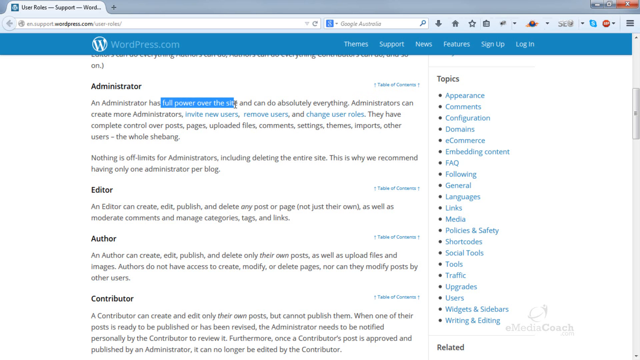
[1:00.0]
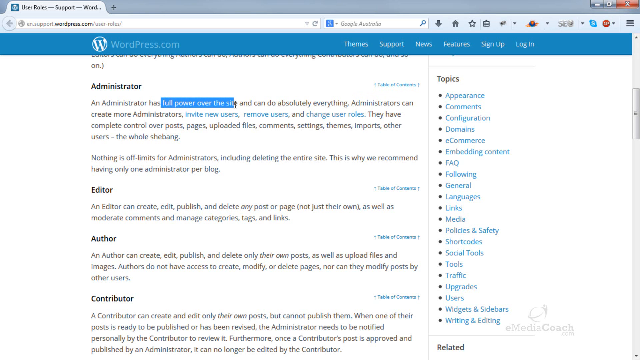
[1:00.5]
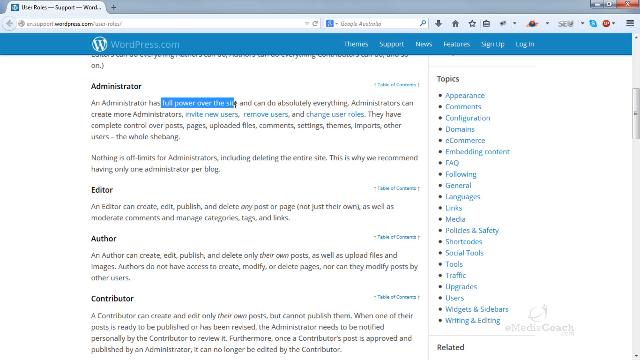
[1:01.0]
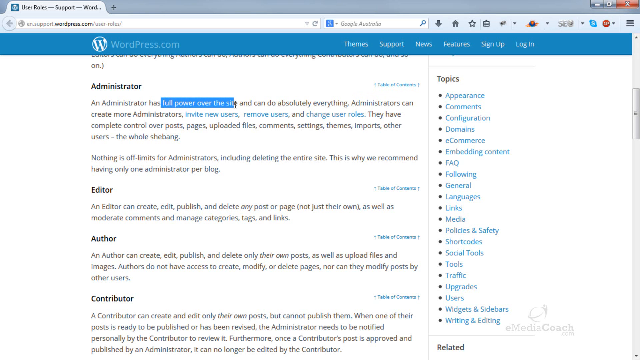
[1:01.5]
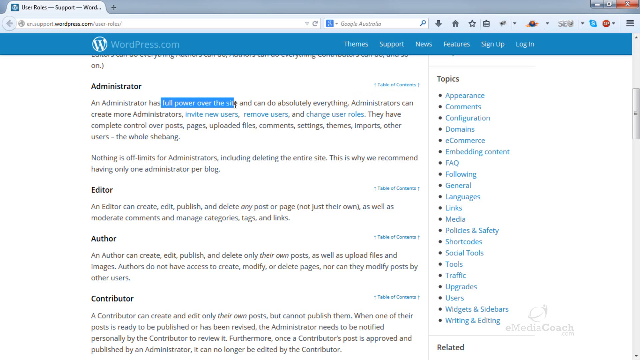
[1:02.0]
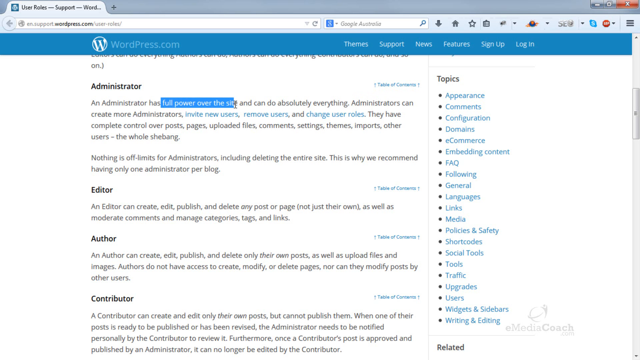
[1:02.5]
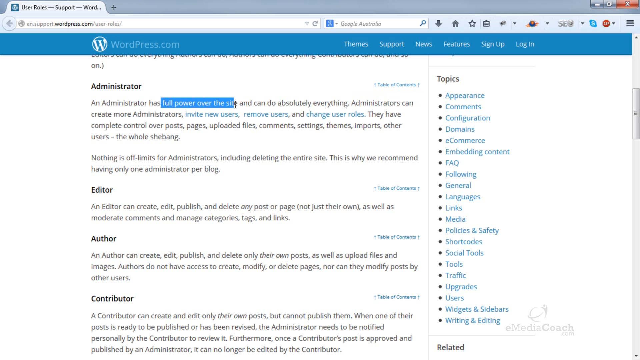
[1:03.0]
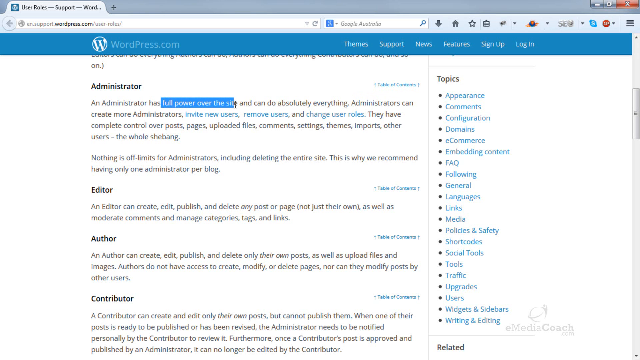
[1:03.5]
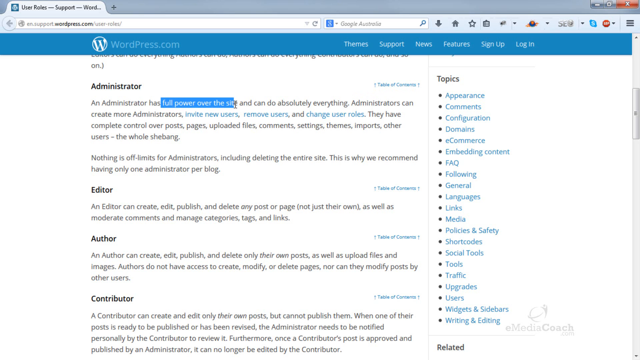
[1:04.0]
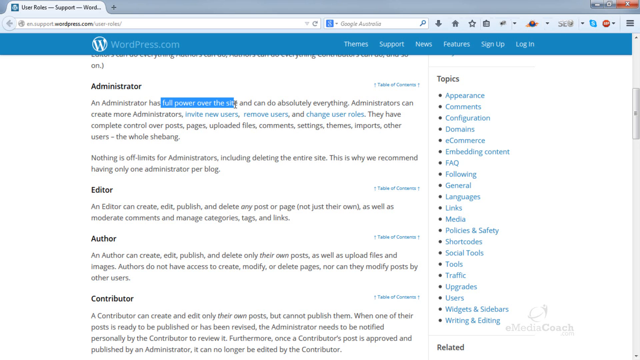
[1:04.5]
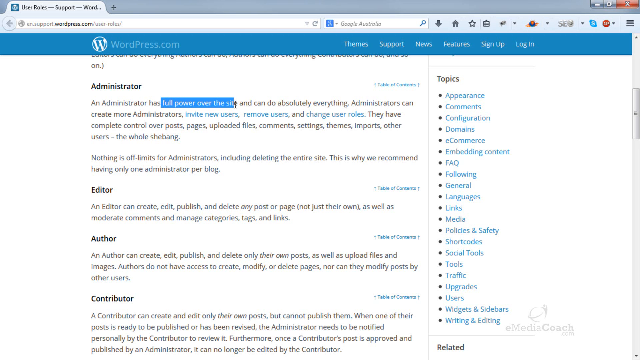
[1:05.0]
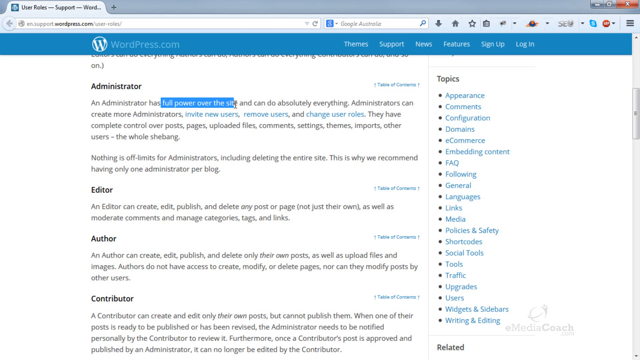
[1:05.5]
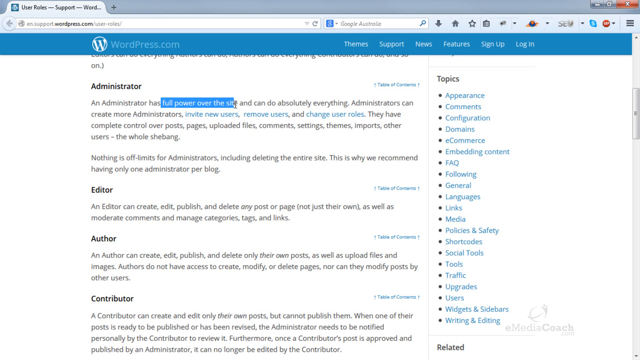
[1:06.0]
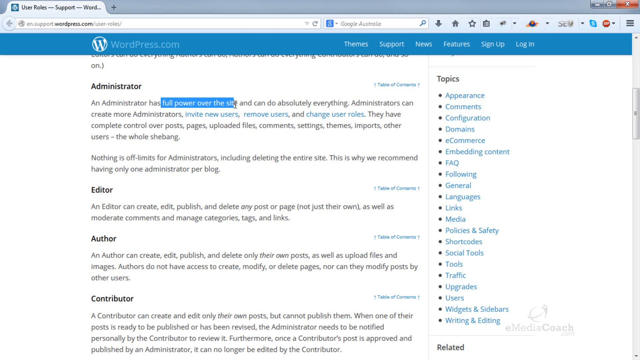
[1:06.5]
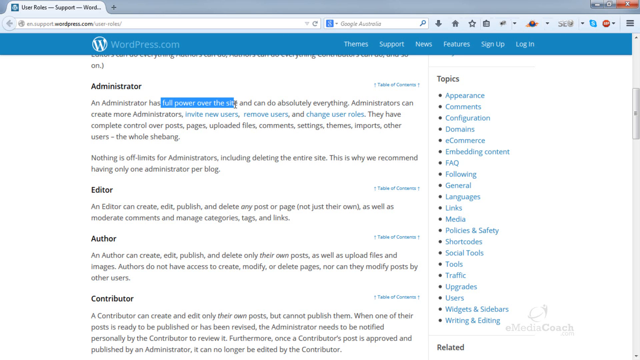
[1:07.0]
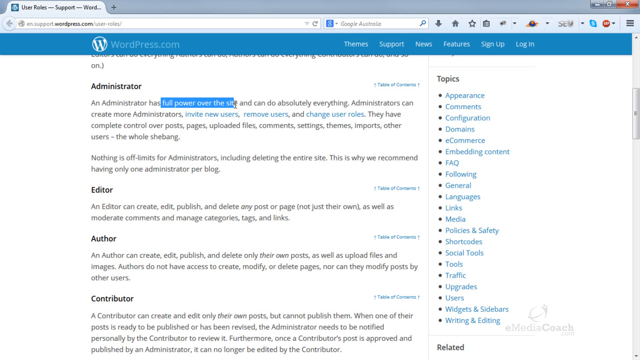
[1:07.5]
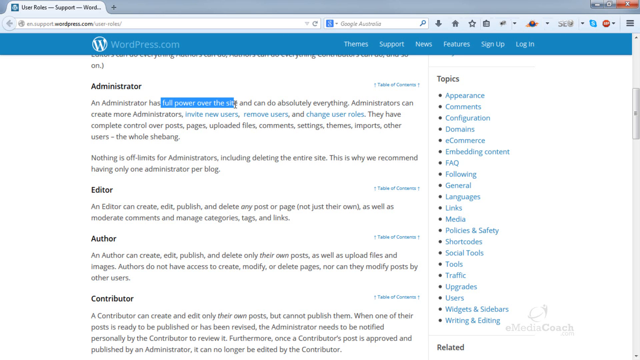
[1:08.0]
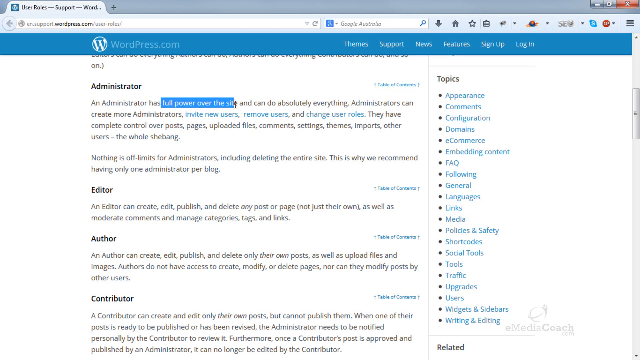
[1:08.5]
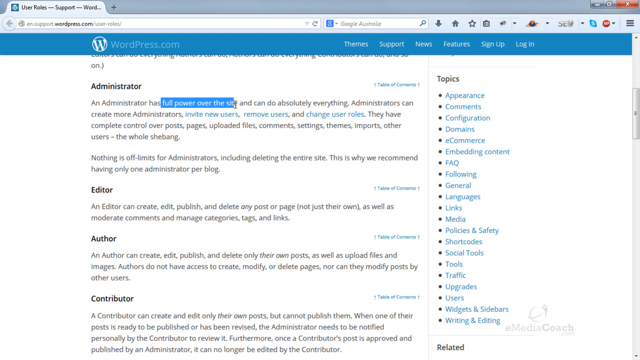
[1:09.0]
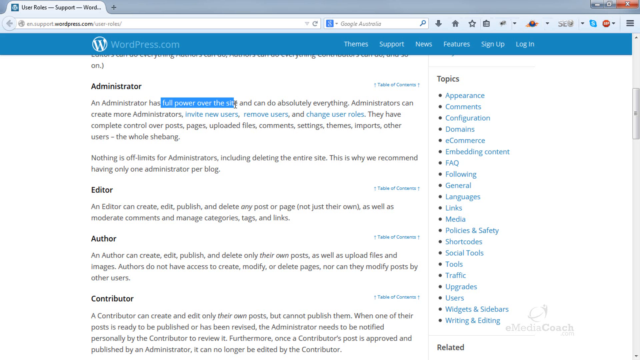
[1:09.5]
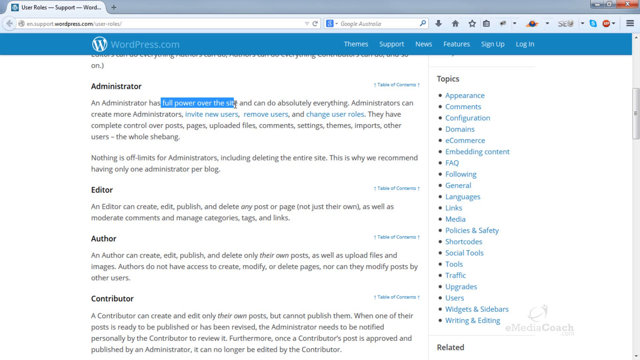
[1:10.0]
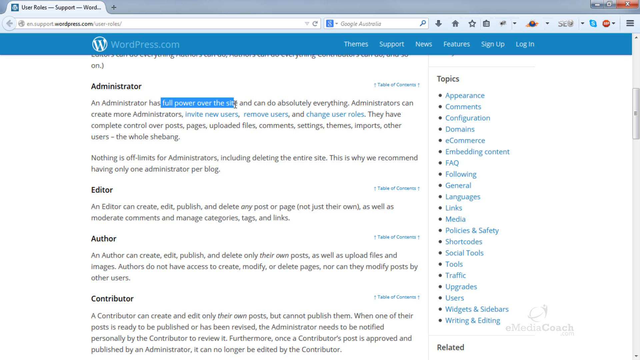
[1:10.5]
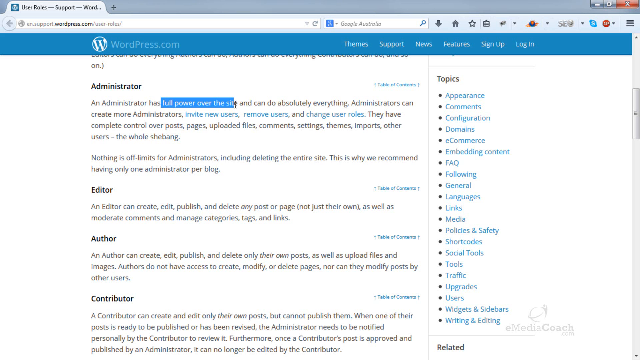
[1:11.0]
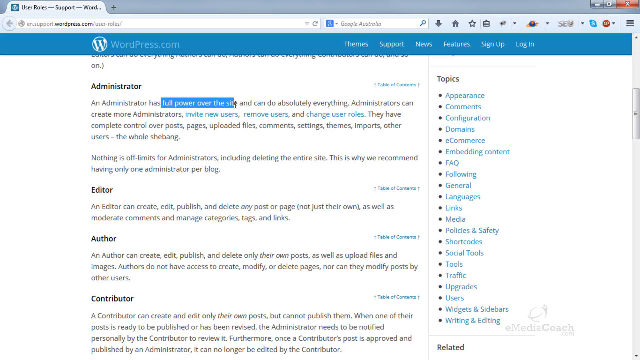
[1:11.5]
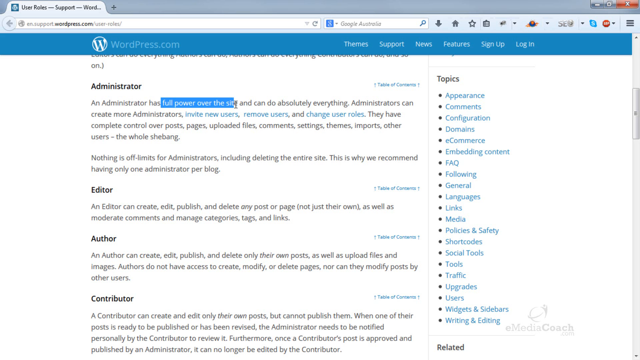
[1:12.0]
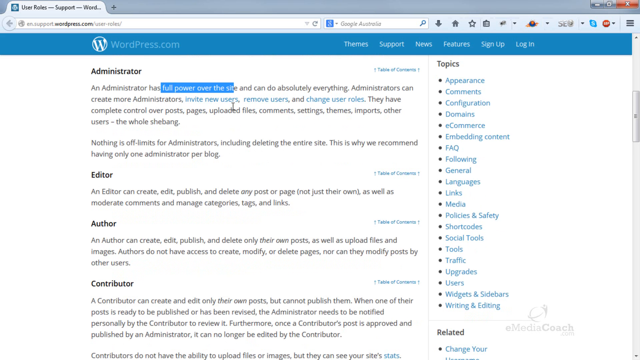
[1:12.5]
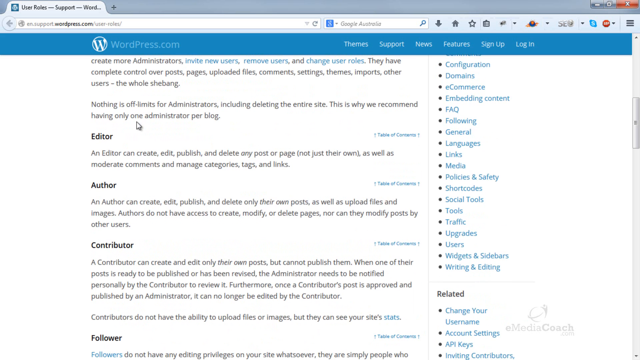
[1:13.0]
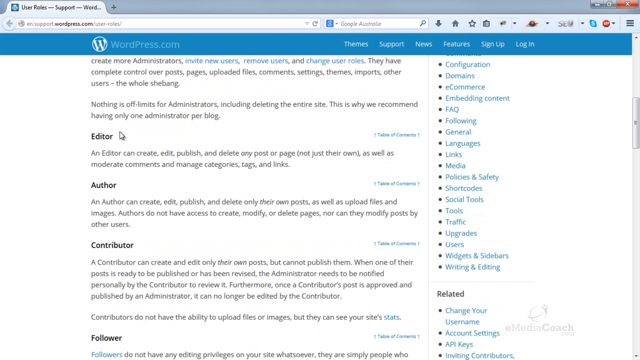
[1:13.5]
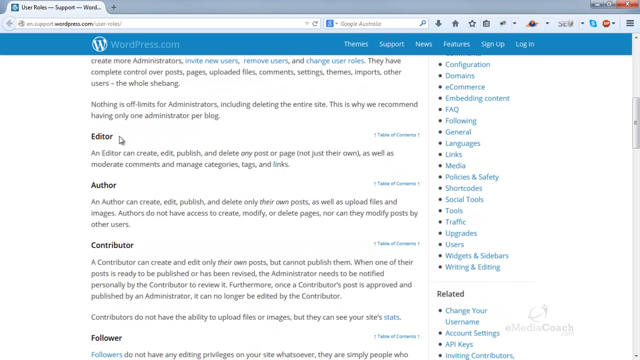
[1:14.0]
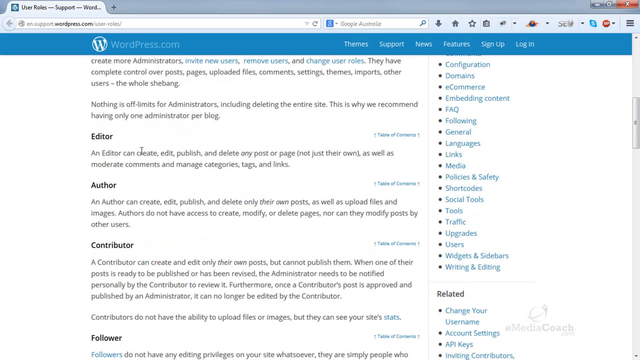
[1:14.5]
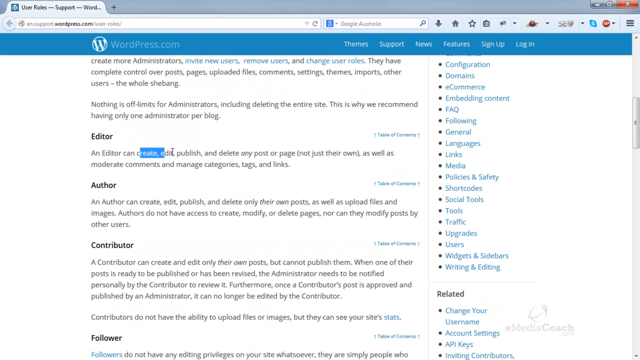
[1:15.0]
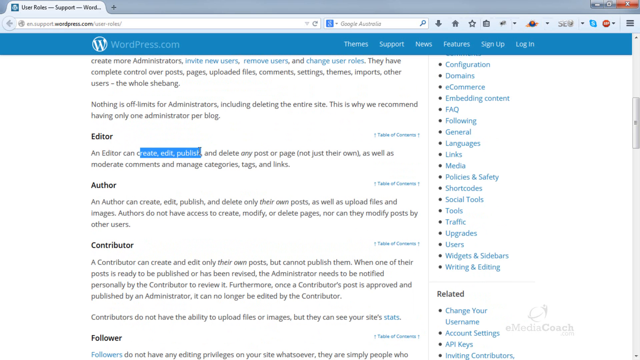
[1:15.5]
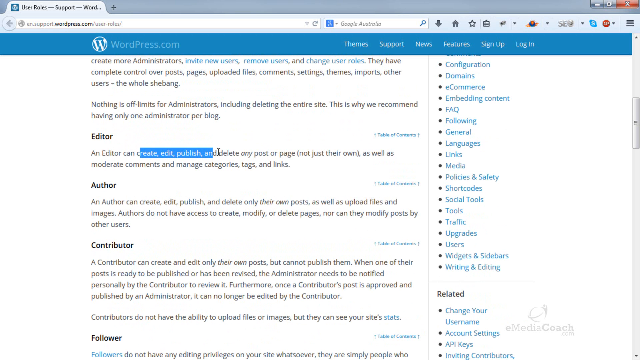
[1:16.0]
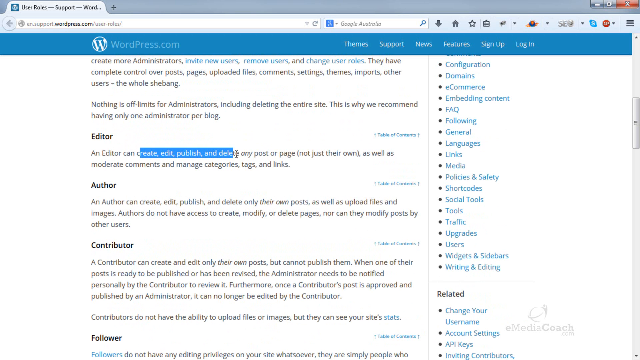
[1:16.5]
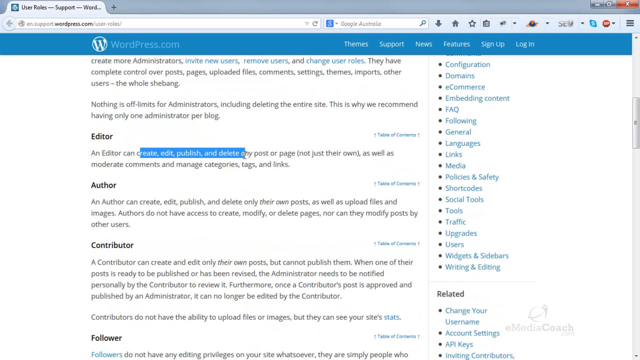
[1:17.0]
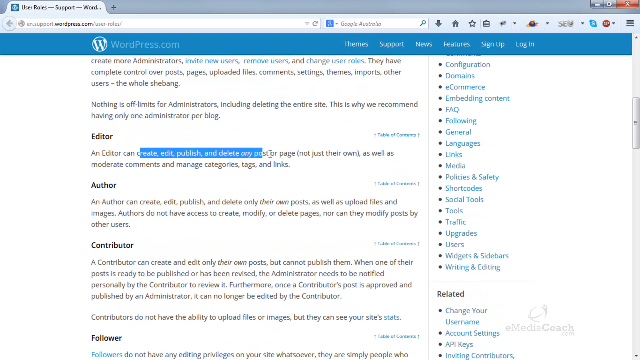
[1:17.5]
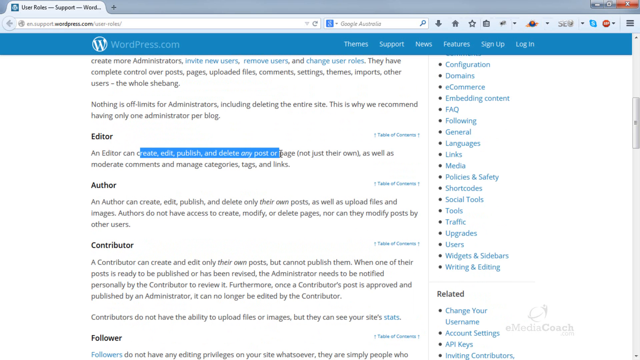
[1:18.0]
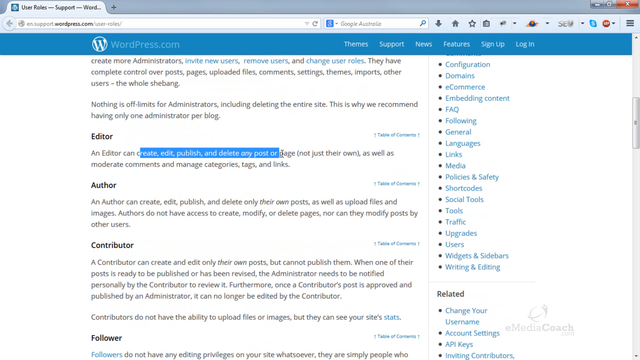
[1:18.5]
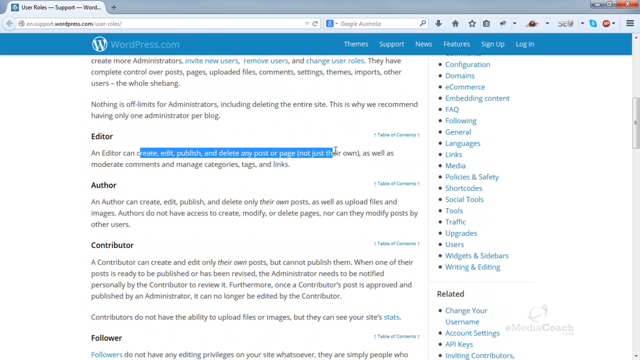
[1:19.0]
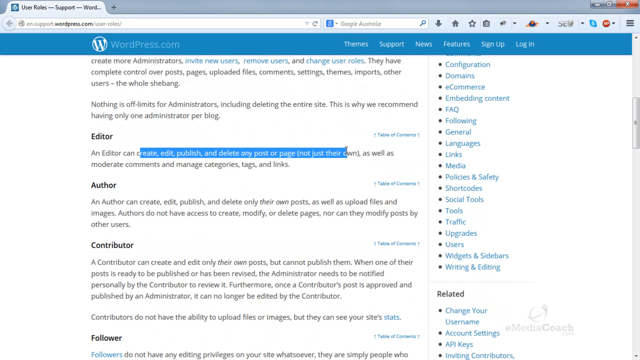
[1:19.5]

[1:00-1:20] The person is still on the WordPress website, in the user role section. The text reads: "An administrator has full power over the site and can do absolutely everything. Administrators can create more administrators, invite new users, remove users, and change user roles. They have complete control over posts, pages, uploaded files, comments, settings, themes, imports, other users, the whole shebang. Nothing is off limits for administrators, including deleting the entire site. This is why we recommend having only one administrator per blog." Under "Editor": "An editor can create, edit, publish, and delete any post or page, not just their own, as well as moderate comments and manage categories, tags, and links." Under "Author": "An author can create, edit, publish, delete only their own posts, as well as upload images and files. Authors do not have access to create, modify, delete pages, nor can they modify posts by other users." The person highlights "full power of the site" in the administrator section, then scrolls down to the editor section and highlights "create, edit, publish, delete any post".